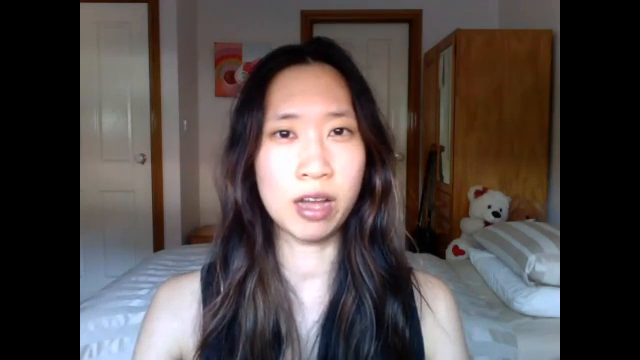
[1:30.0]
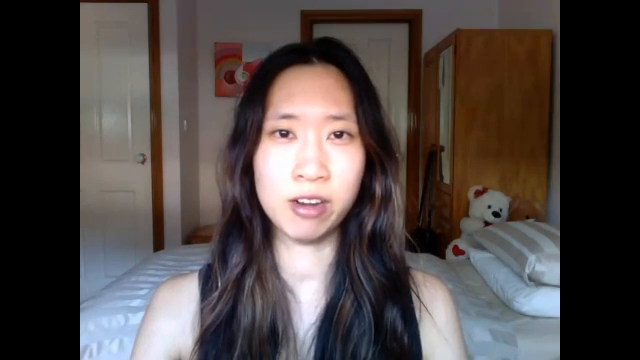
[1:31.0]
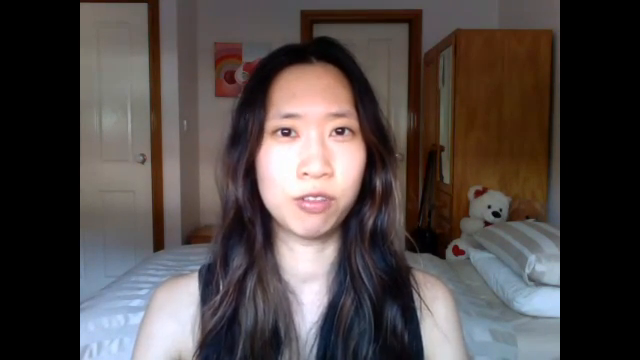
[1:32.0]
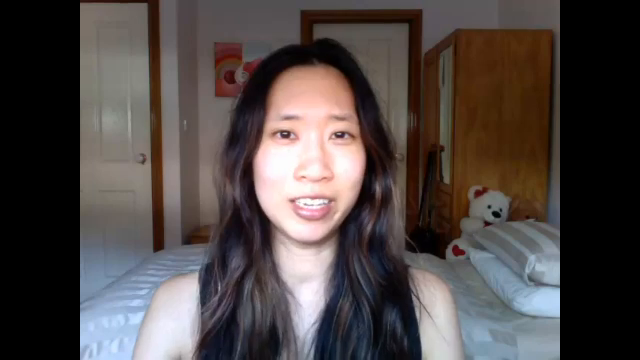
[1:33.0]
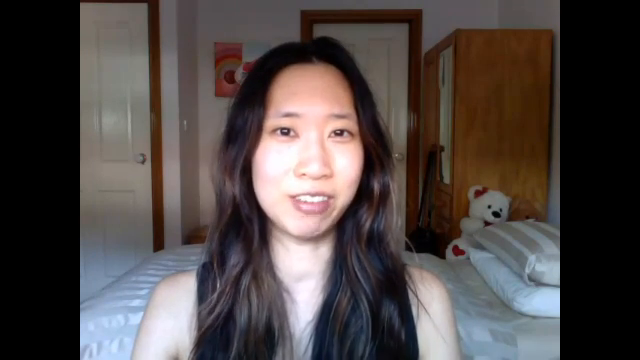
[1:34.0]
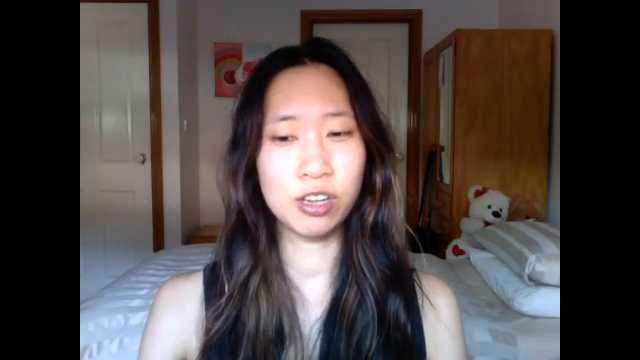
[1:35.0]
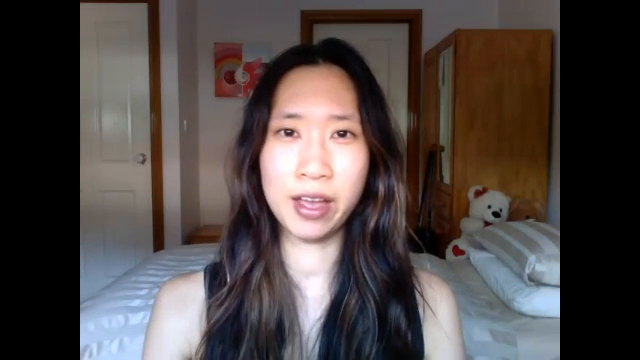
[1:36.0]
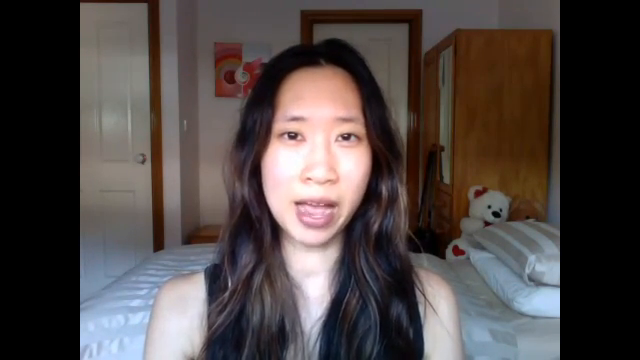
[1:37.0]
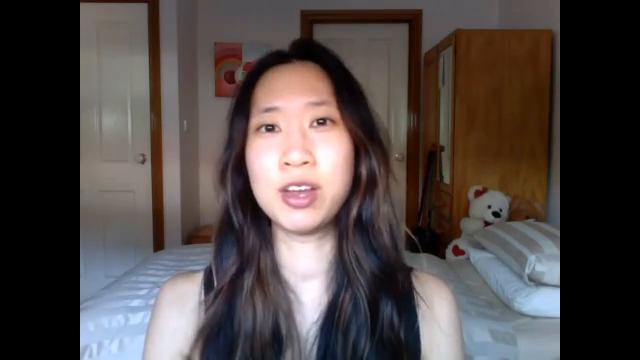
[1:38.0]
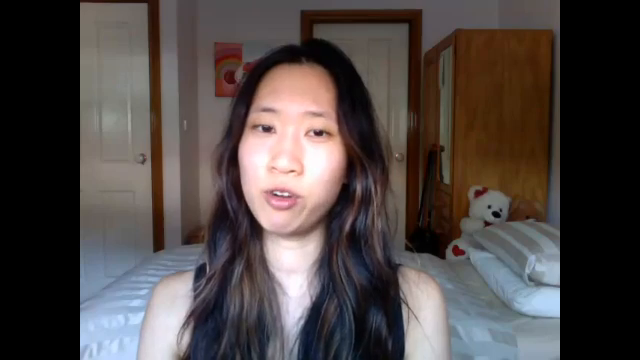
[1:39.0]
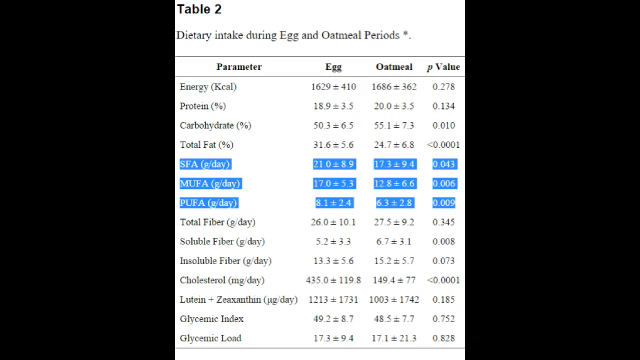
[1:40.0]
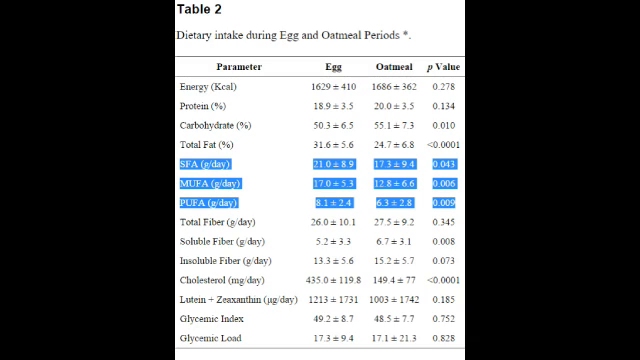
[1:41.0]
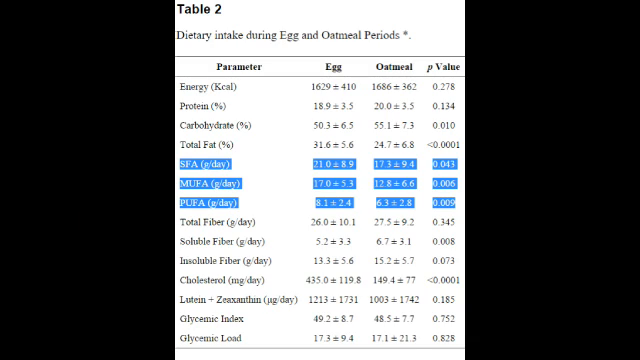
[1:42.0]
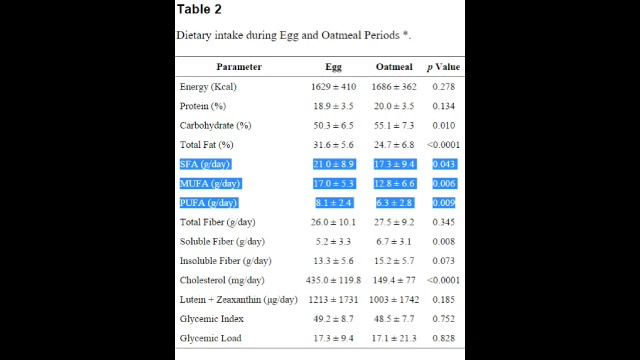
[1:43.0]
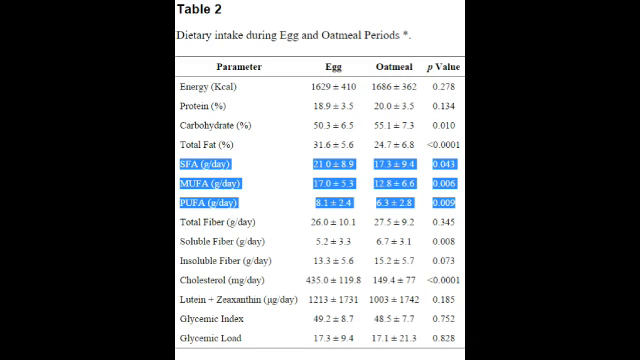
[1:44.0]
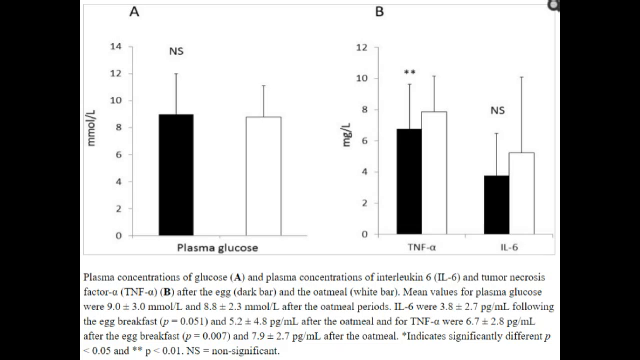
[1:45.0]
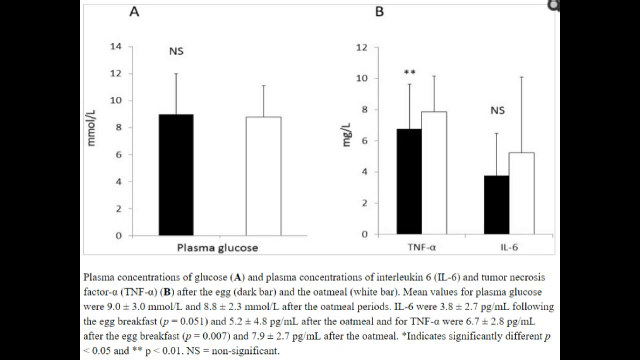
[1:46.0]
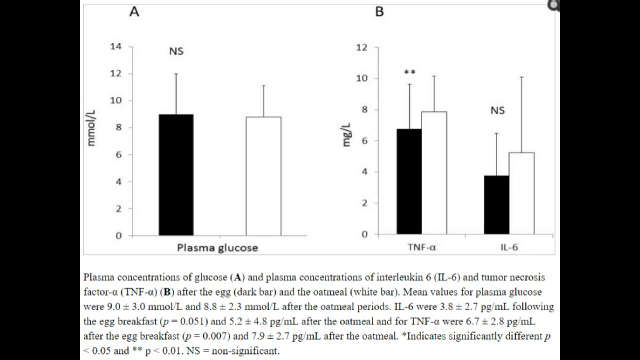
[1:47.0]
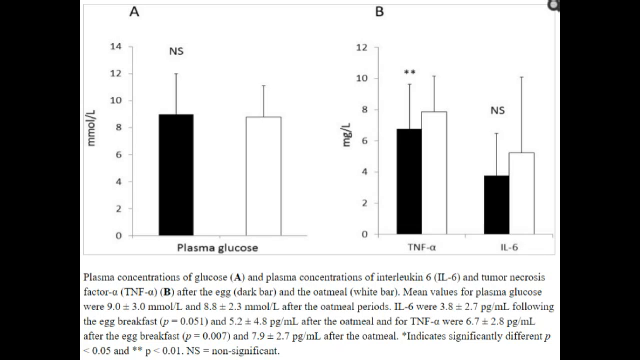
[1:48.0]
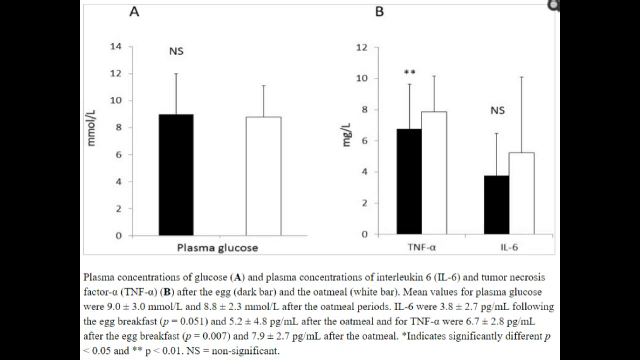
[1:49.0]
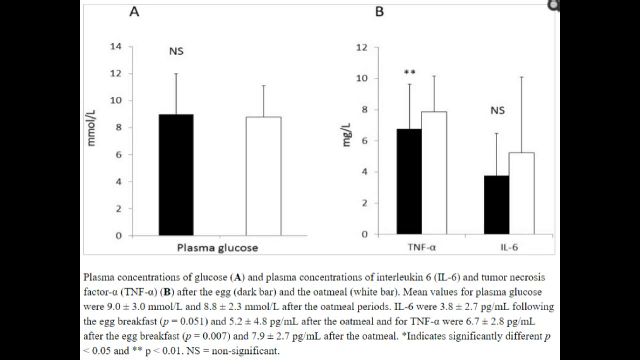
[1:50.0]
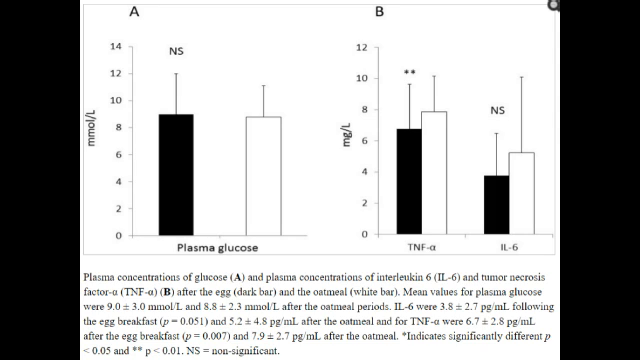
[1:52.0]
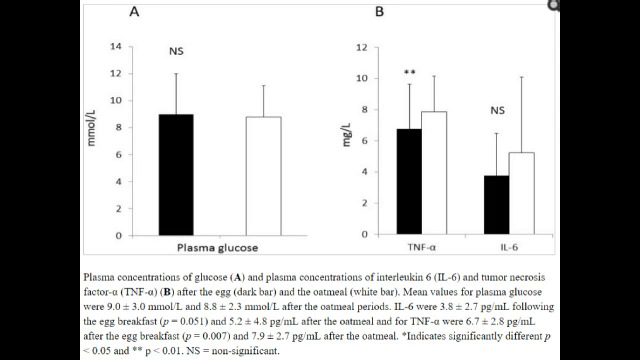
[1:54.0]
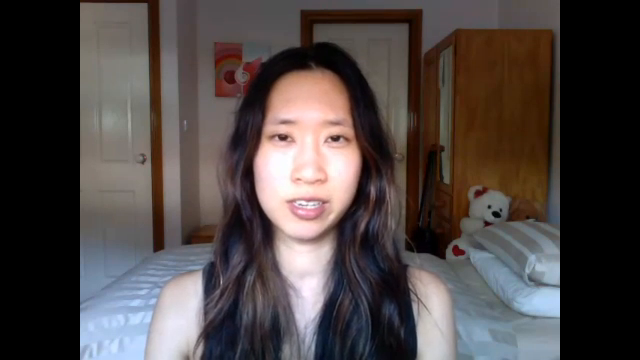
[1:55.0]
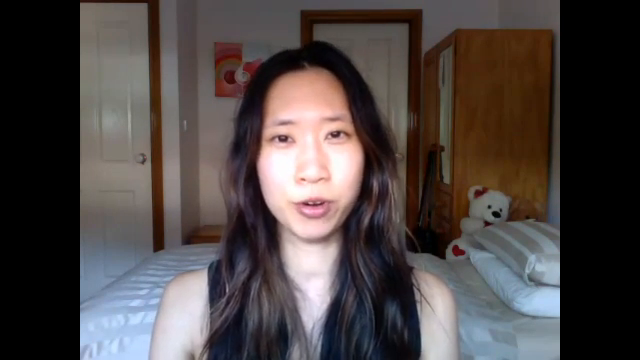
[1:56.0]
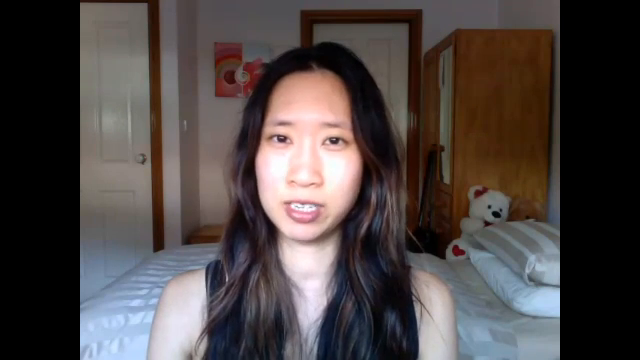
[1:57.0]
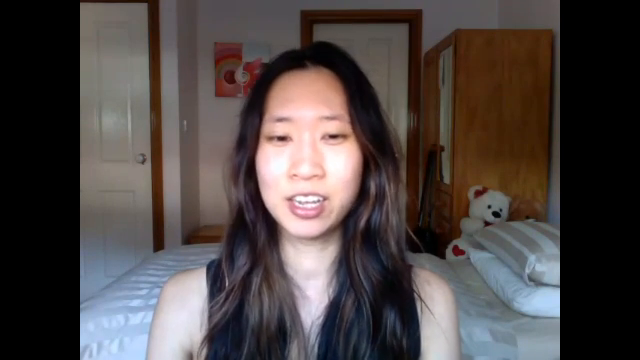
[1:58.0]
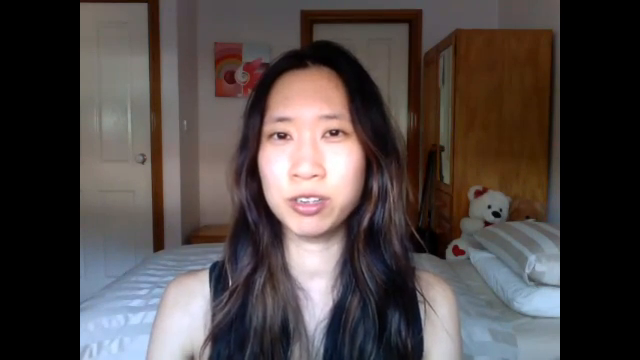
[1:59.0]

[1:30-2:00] A title card reads "Lisa in Love" with little hearts floating. The Asian woman is again shown discussing the article, with little emotion on her face apart from a slight smile. An image of the abstract appears with nothing highlighted, and then the highlighted part of the abstract concerning the breakfasts with 40 grams of oatmeal is shown. The video returns to the woman, who keeps eye contact, occasionally looking down, apparently to read the article, with a bit of earnestness in her expression. A graph then appears with headings for parameter, oatmeal and p value; the parameters include energy, protein, carbohydrate and total fat, and the parameters SFA, NFUA and PUFA are highlighted.